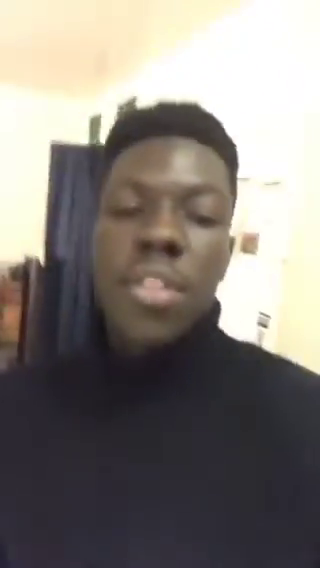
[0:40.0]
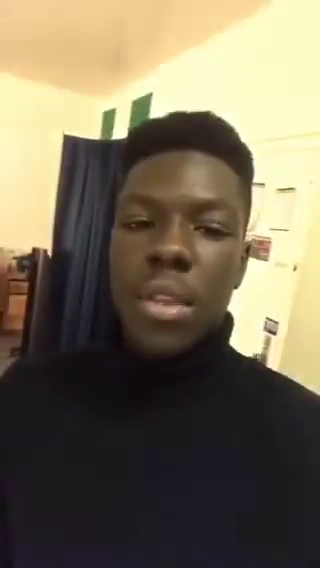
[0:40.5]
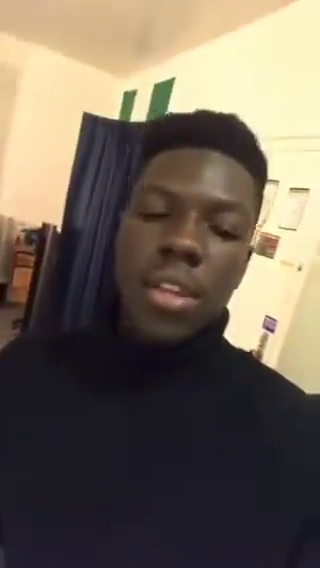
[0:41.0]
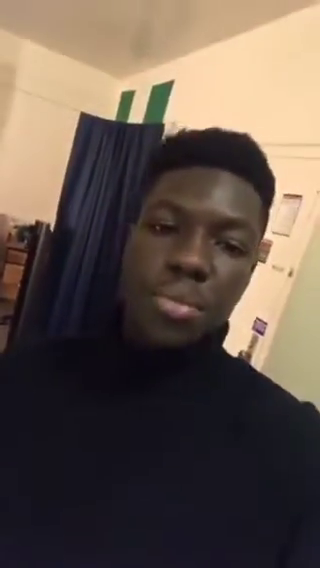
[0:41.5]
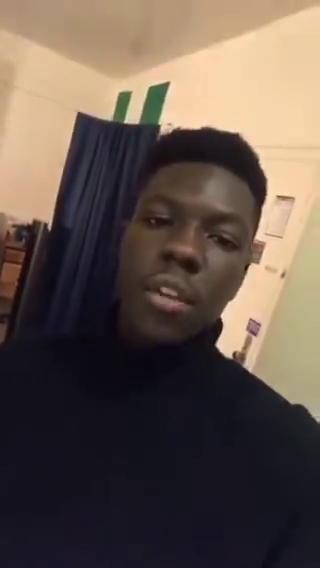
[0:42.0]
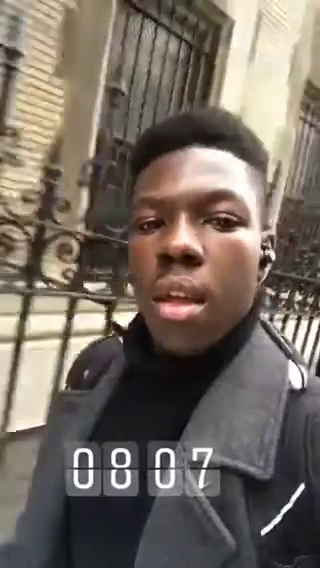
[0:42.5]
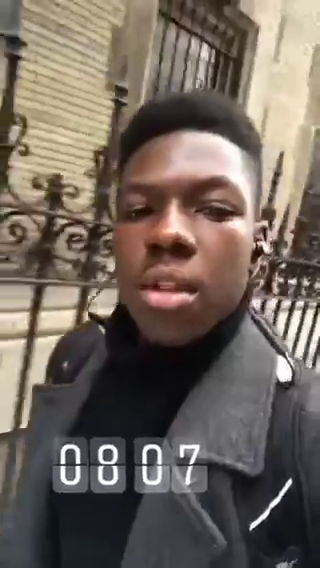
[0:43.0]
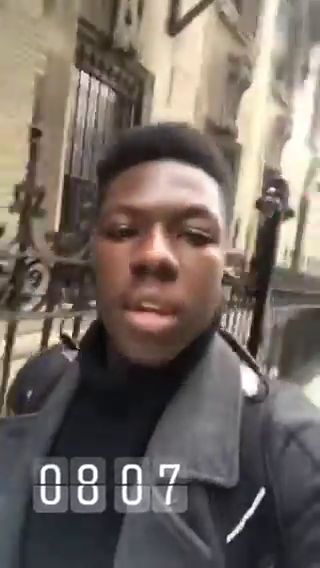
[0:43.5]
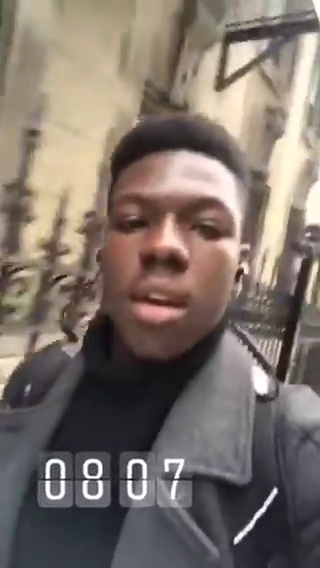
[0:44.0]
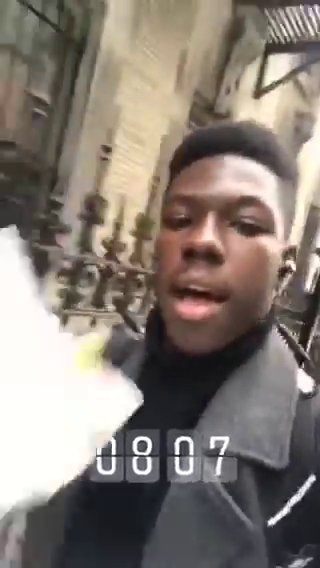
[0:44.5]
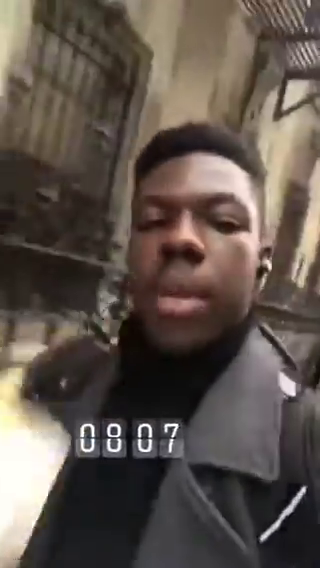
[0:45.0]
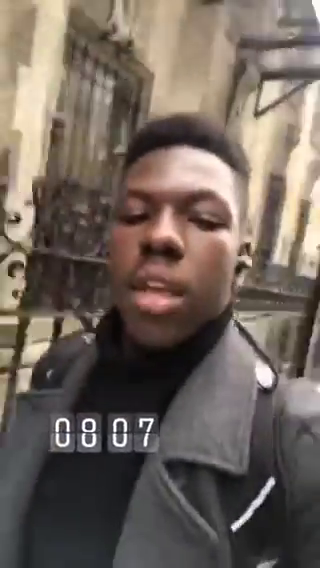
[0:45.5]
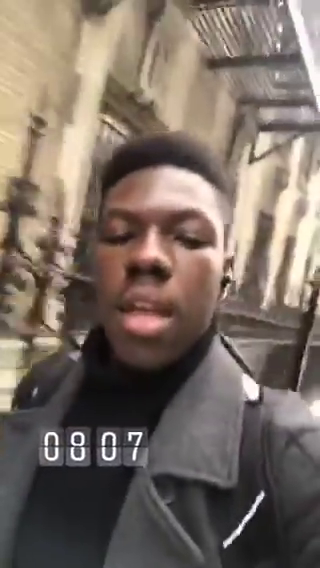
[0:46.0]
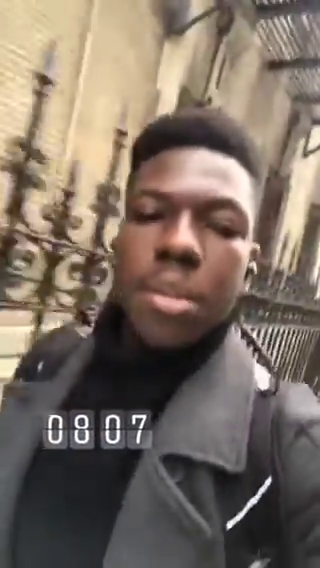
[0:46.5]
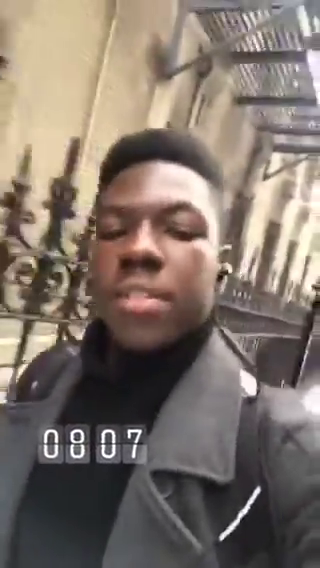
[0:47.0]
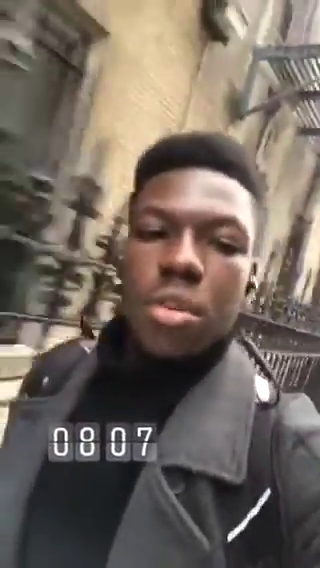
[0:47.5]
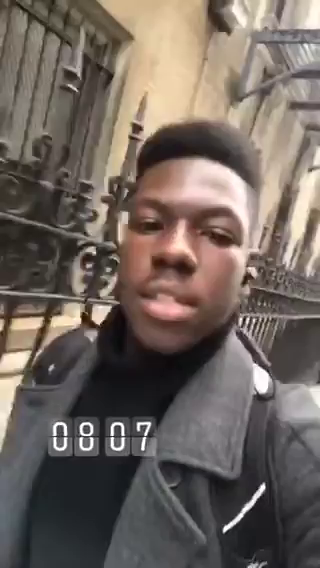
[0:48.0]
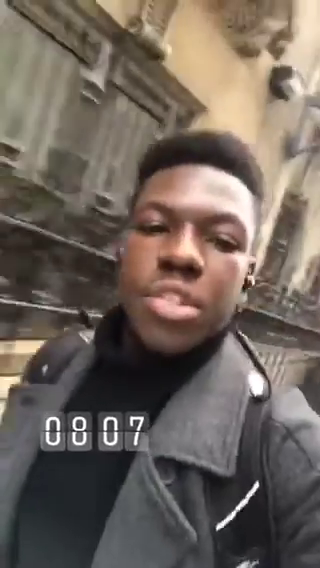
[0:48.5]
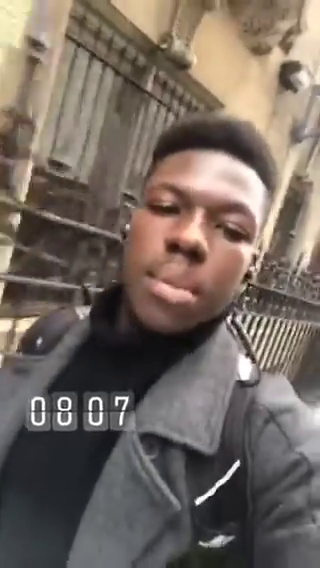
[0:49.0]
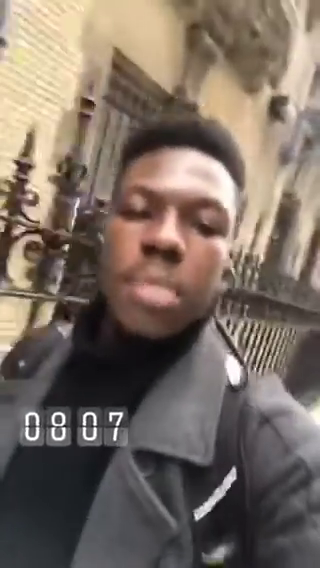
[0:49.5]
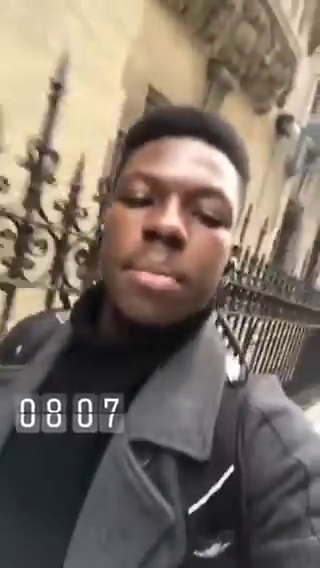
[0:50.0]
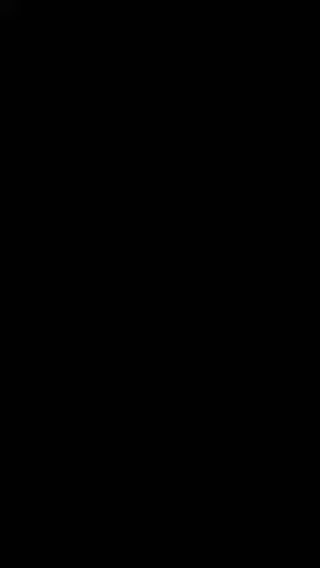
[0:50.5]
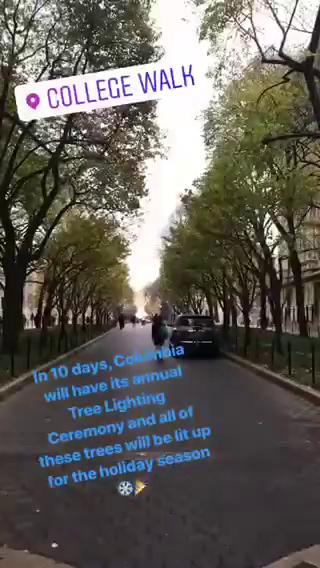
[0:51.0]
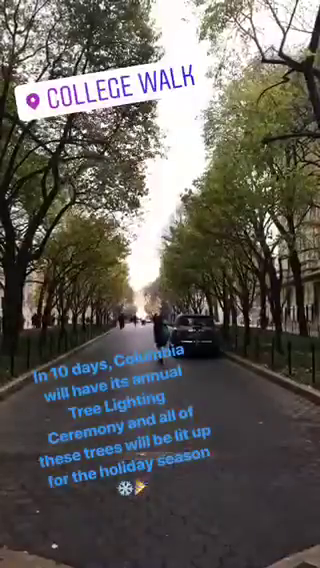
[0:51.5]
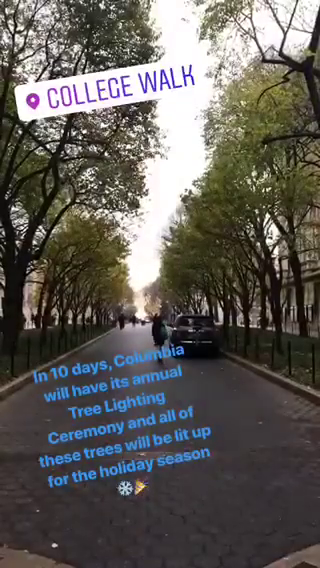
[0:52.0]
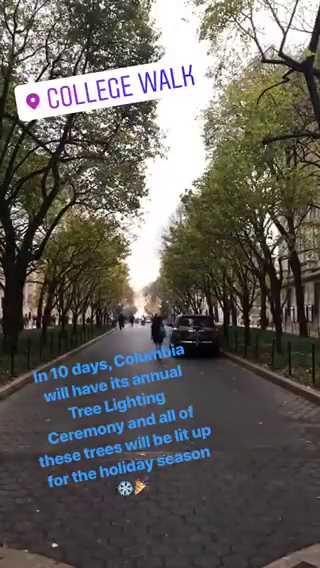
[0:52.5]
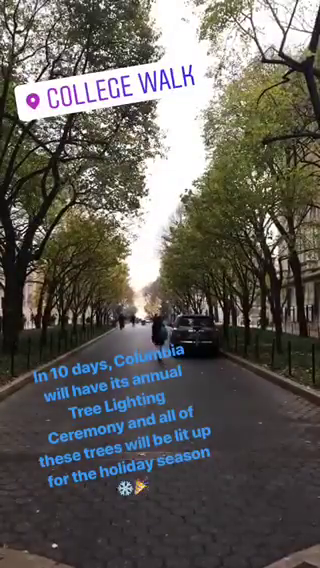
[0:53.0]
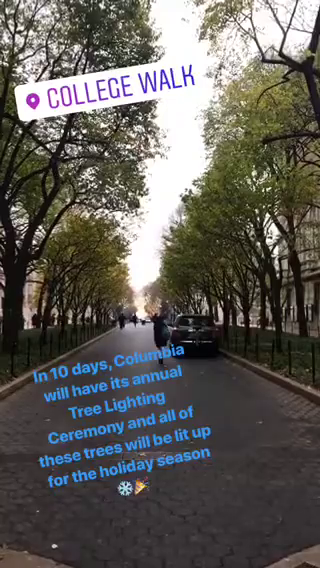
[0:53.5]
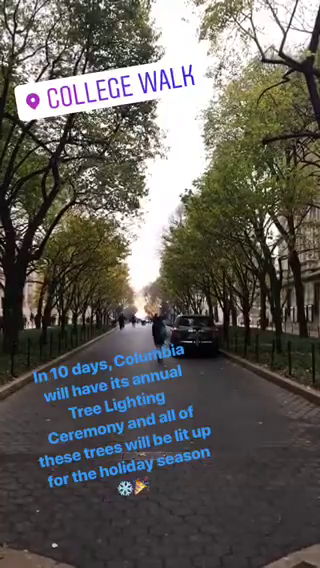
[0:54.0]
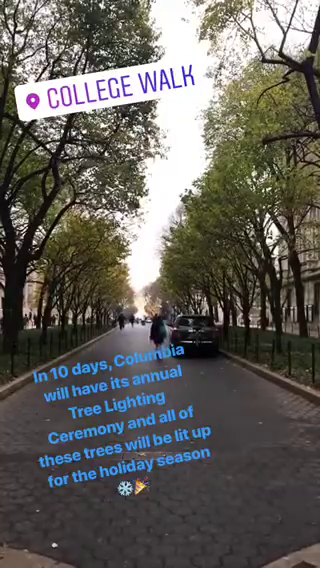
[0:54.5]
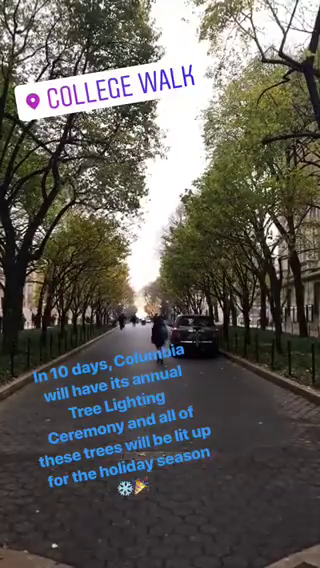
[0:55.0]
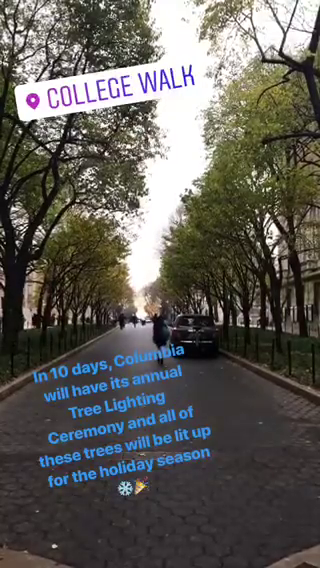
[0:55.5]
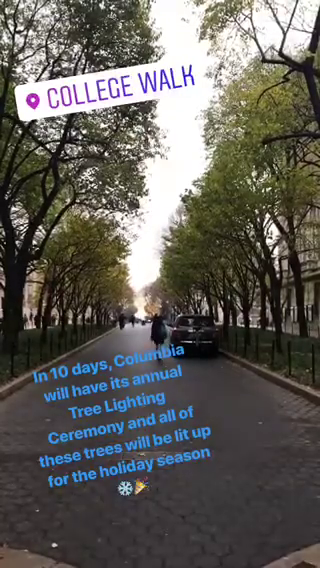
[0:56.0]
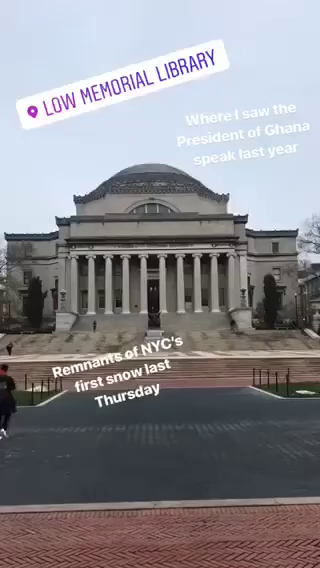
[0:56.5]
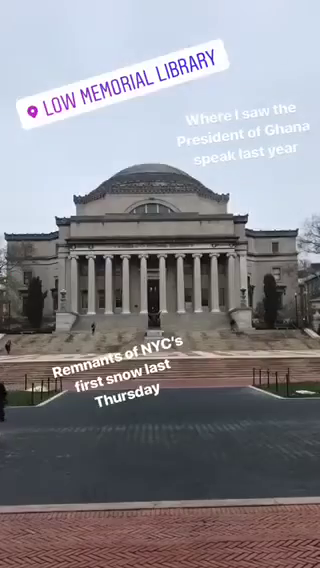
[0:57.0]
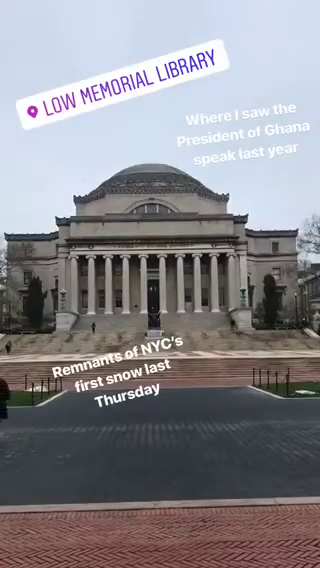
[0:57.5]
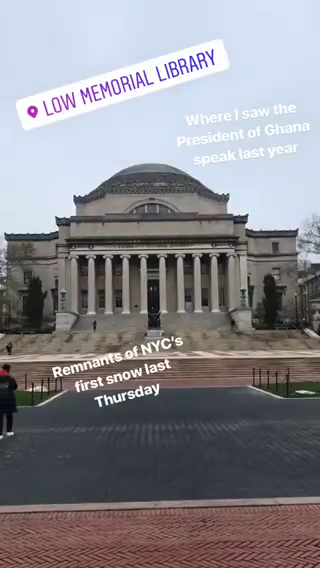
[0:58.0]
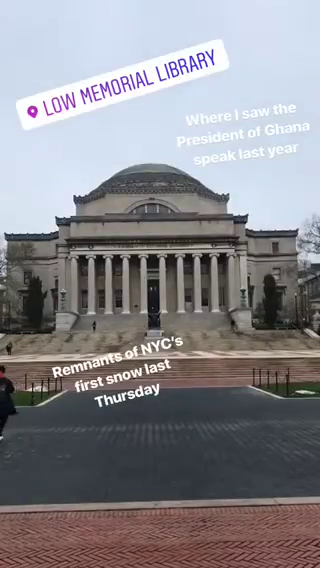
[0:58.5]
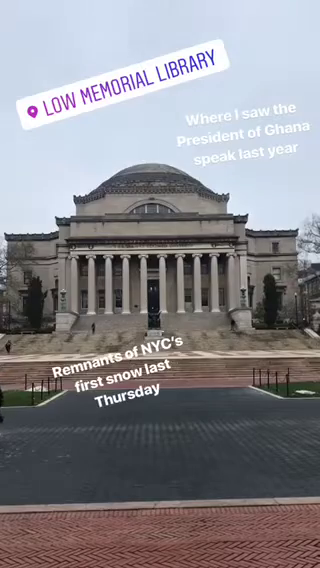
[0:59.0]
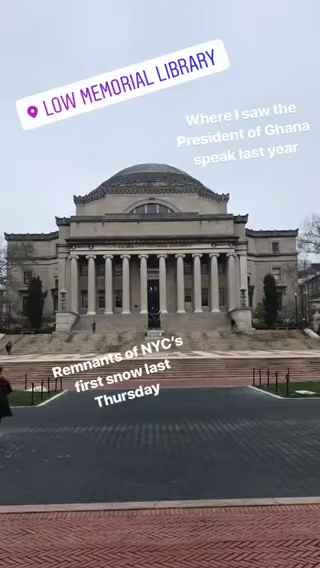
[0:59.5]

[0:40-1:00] The young man is in a different setting, using his phone to record himself. He is inside another room or building. To the right there is a white door with brown hinges and a small window in the door. A page with green on it is on the wall, a brown bed is at the back, and a navy blue curtain hangs at the back. He is then on the street, and a different date pops up on the screen. He now wears a black jacket and walks along the street, with a cream building in the background. He holds a paper plastic cup that he shows to the camera, and he has earphones in his ears. Text reads "in 10 days, Columbia will have its annual tree lighting ceremony and all of these trees will be lit up for the holiday season", and another label reads "College Walk". Many trees line the passage. The video then shows remnants of New York City's first snow last year.